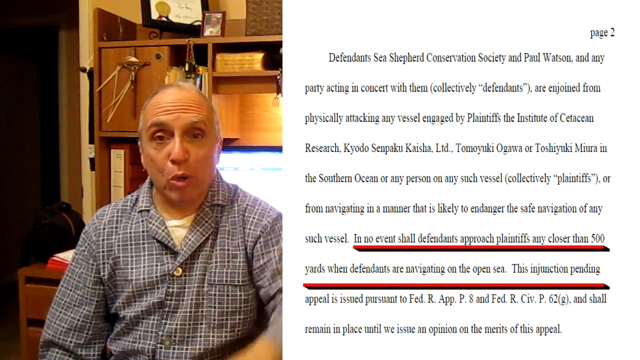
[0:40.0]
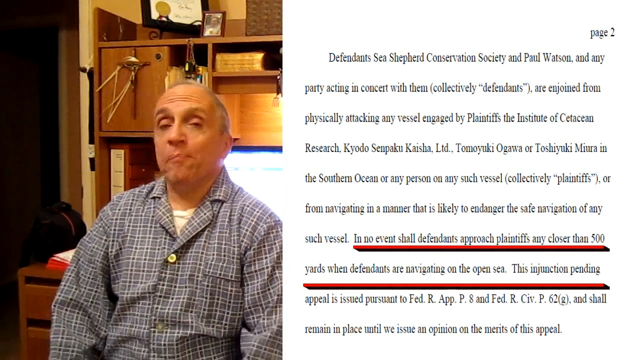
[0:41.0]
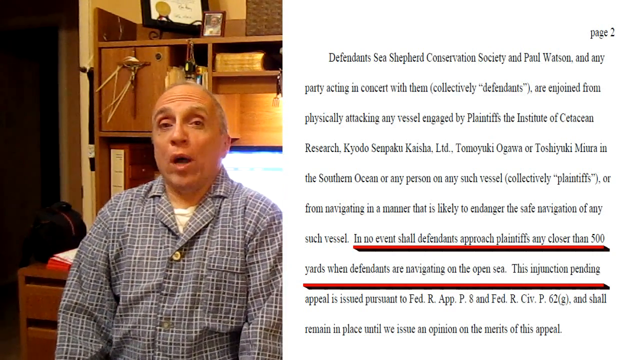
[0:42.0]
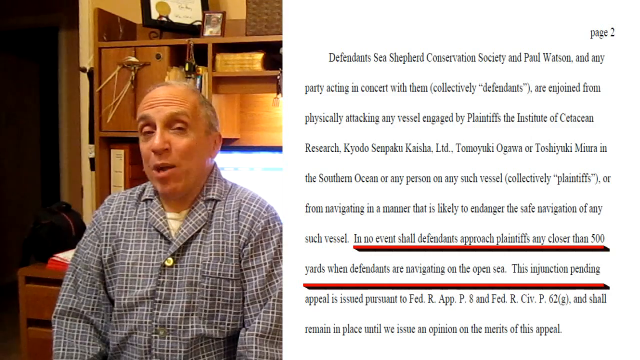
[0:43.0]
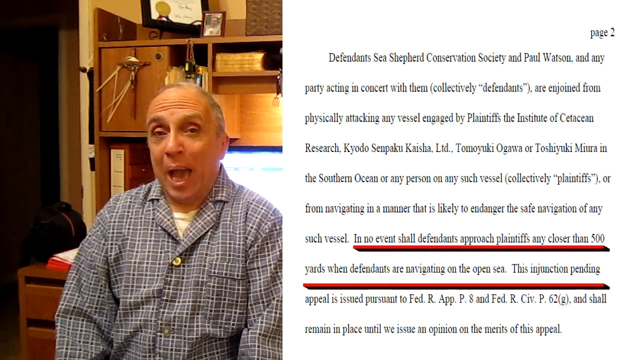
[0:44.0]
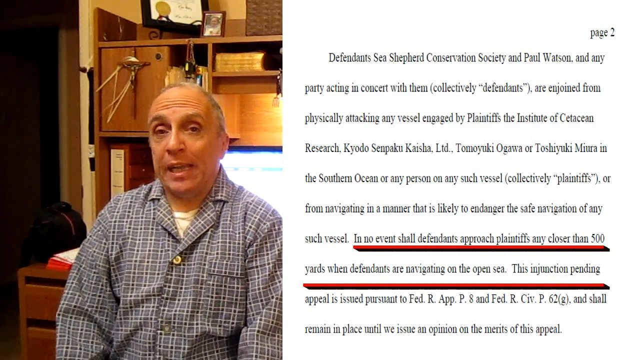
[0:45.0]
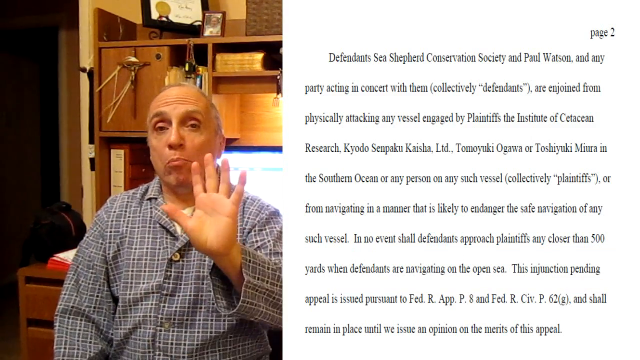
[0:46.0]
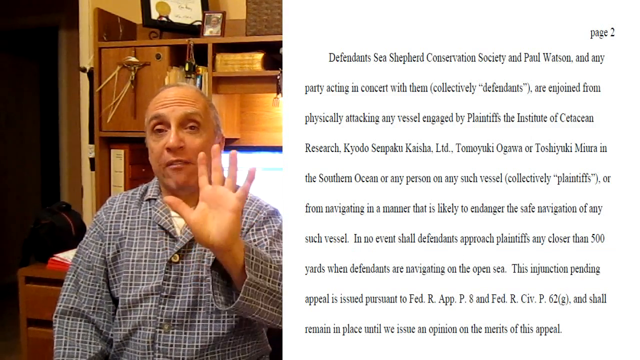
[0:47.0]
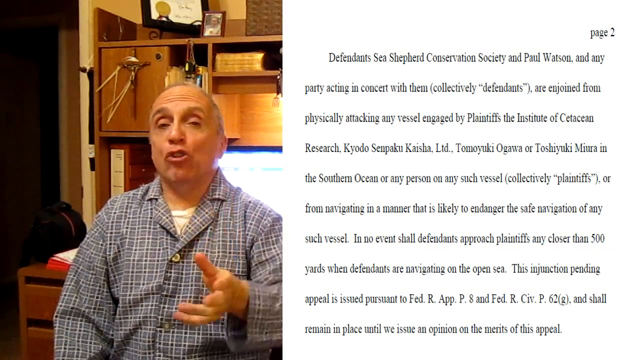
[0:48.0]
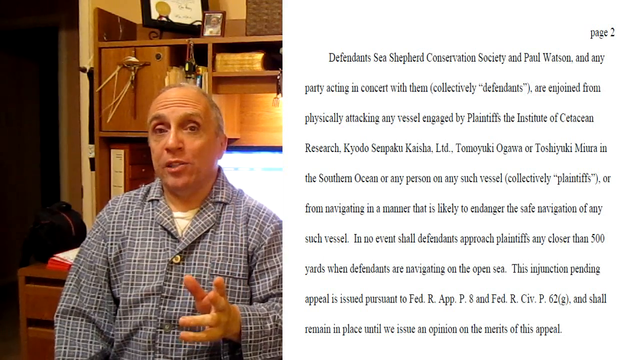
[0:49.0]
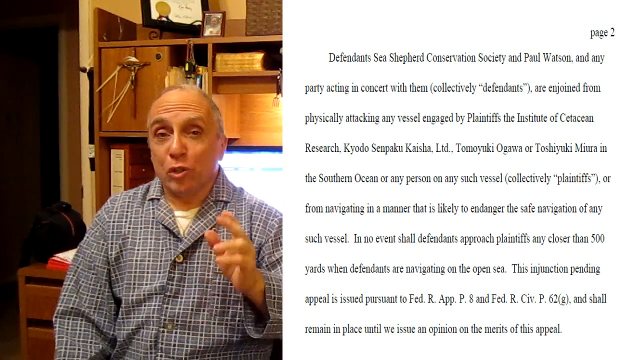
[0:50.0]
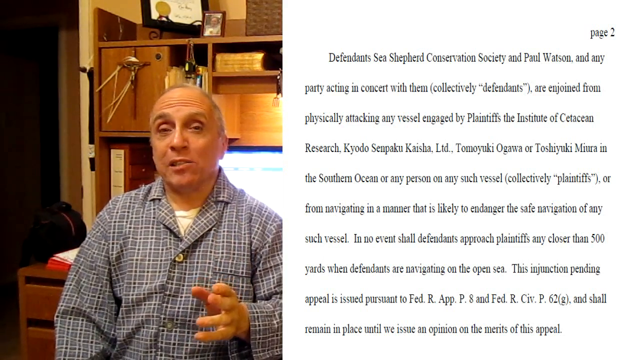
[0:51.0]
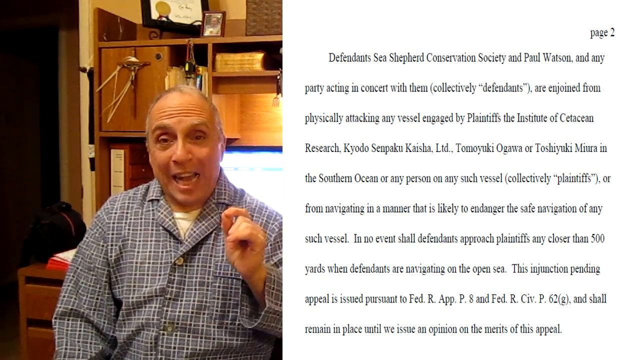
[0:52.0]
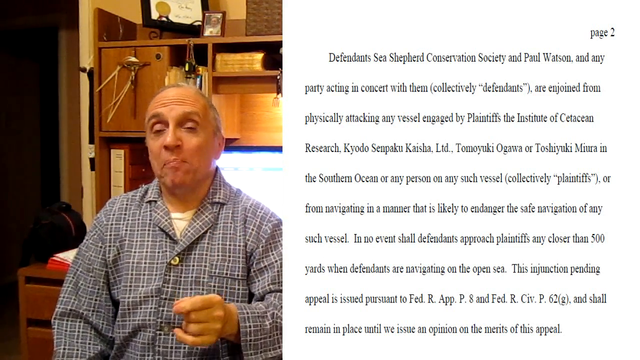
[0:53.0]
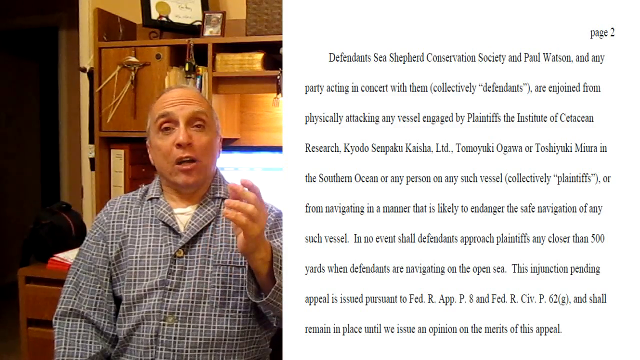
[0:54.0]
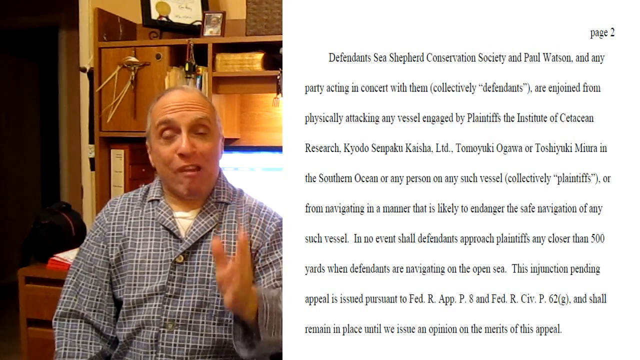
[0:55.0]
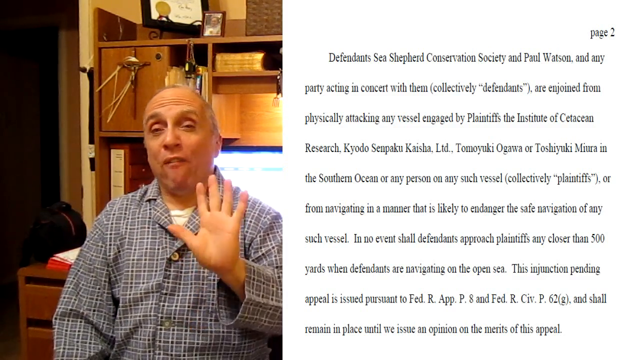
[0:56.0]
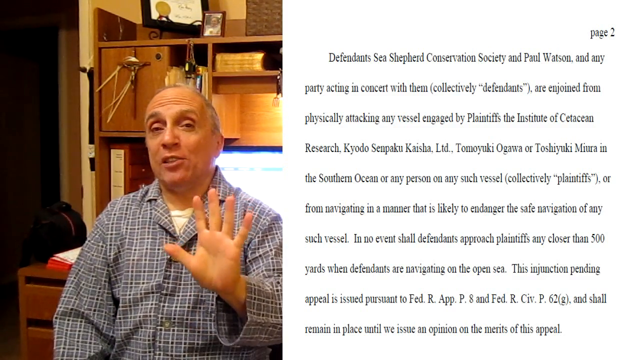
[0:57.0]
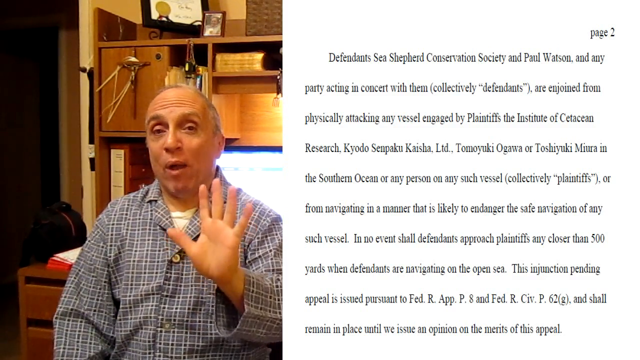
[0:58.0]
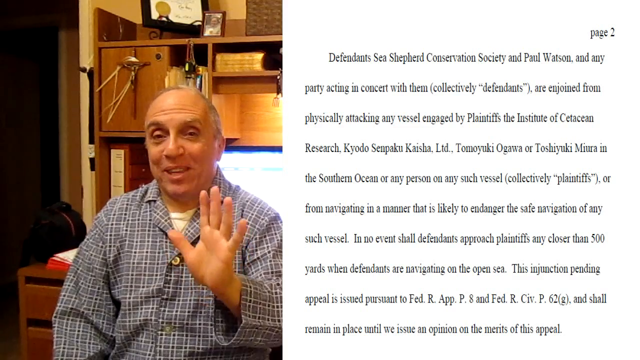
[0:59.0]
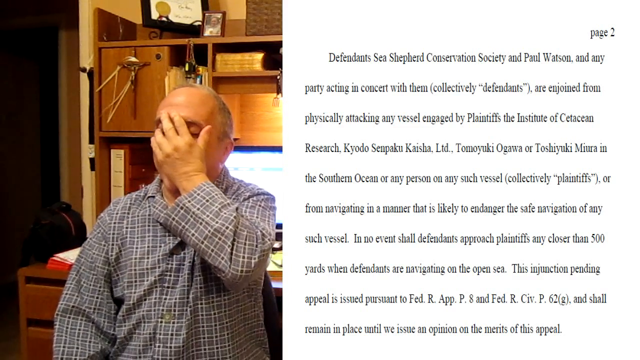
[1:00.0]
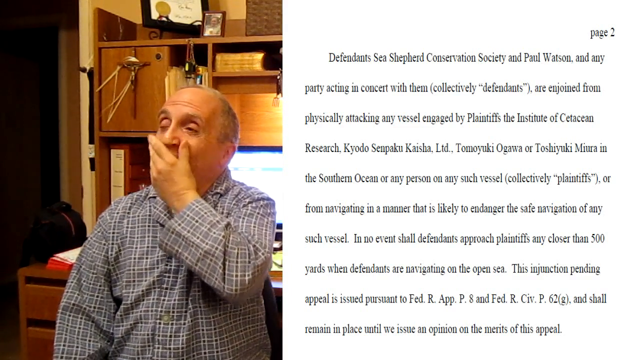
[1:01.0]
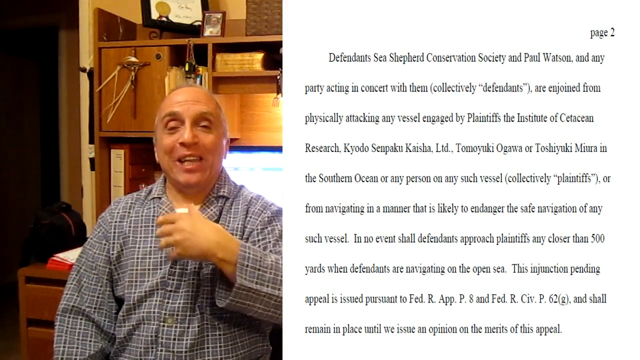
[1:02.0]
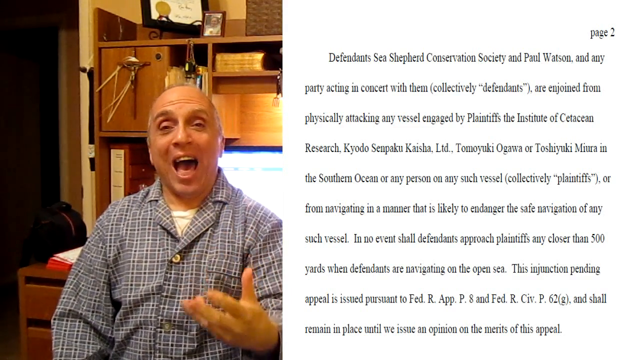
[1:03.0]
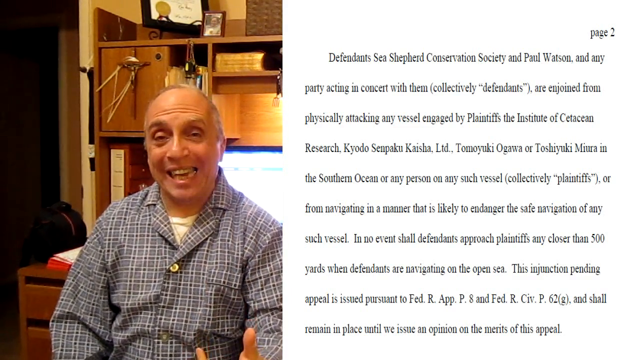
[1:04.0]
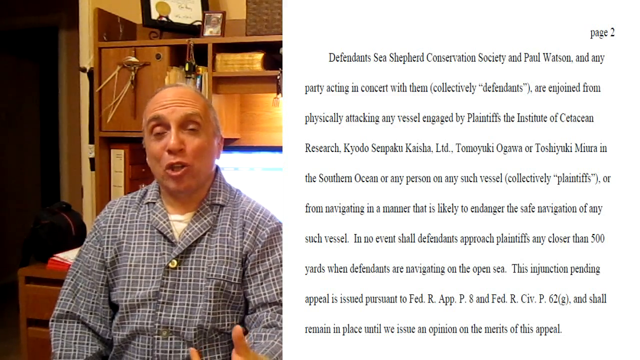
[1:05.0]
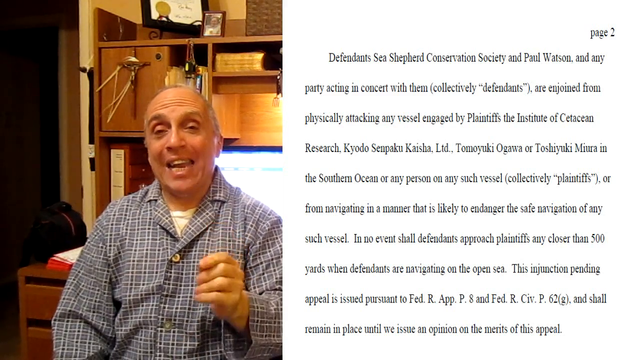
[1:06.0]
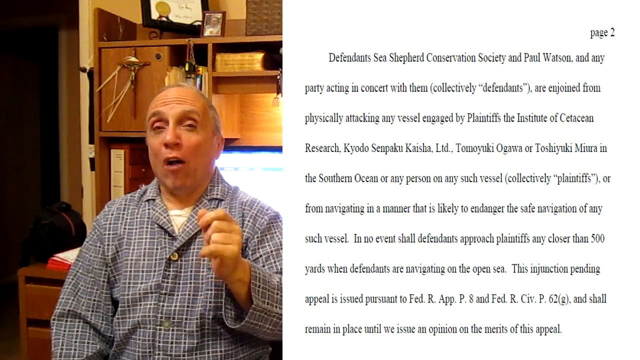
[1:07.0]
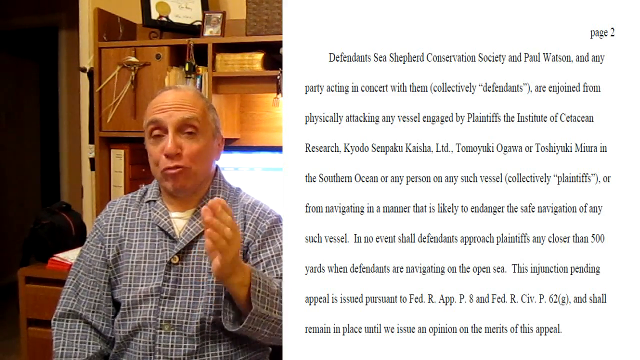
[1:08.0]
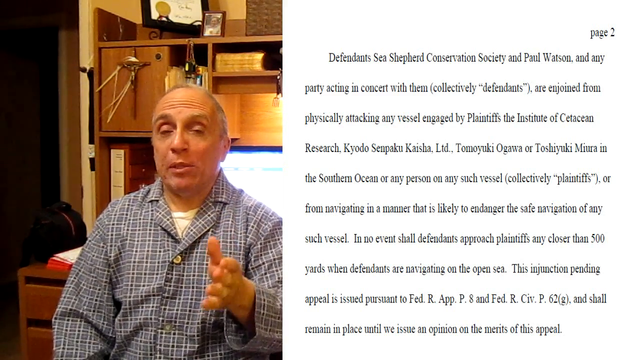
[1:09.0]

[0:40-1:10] A page related to legal actions, apparently about a defendant, is still displayed alongside the same man in the same setting. He keeps talking, moves his hand into the air and makes hand gestures, speaking energetically and passionately, apparently about the contents of the document. He also puts his hand on his face. The background keeps all of the same details, and the page with legal information stays on the screen.